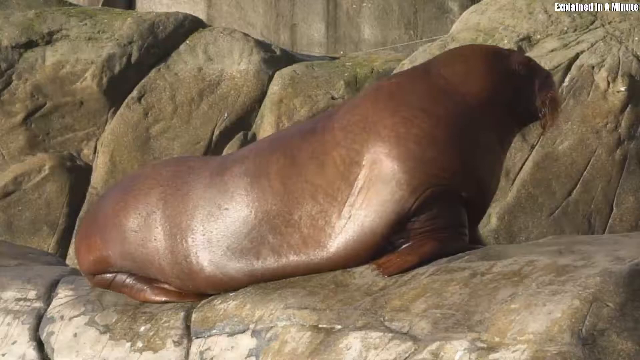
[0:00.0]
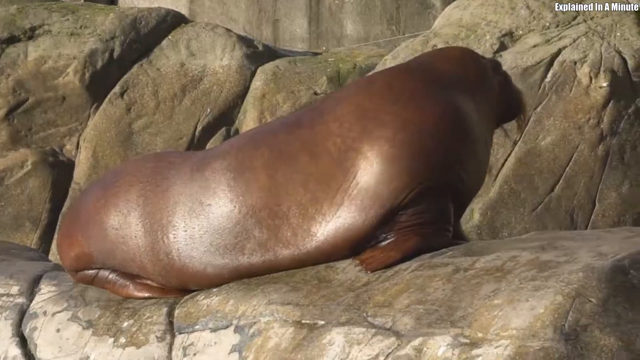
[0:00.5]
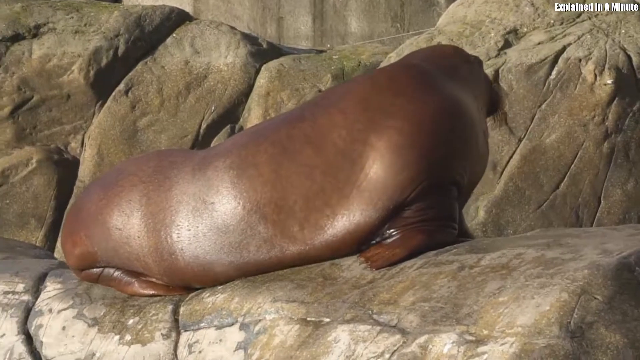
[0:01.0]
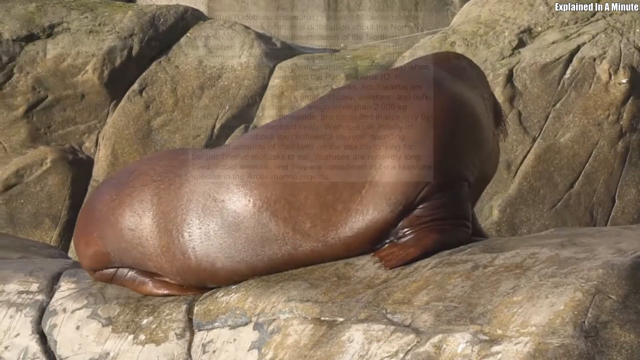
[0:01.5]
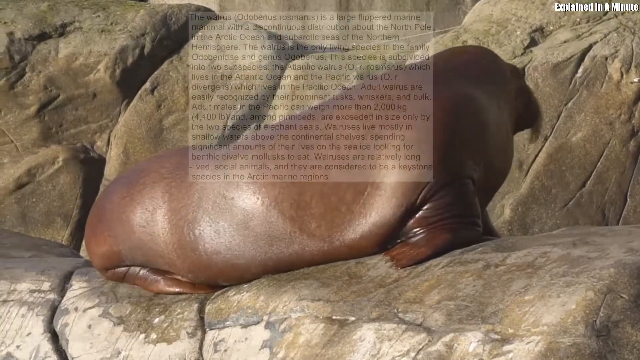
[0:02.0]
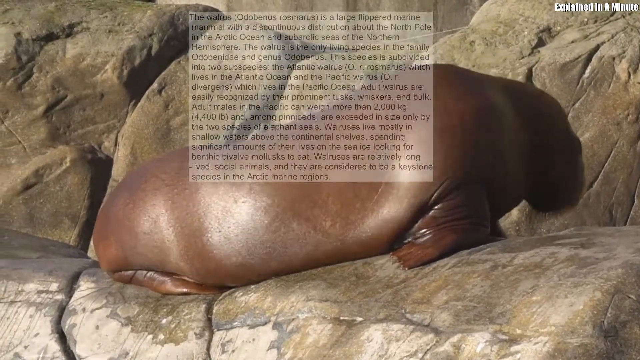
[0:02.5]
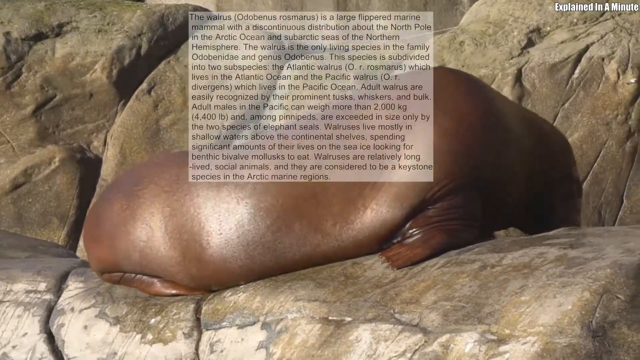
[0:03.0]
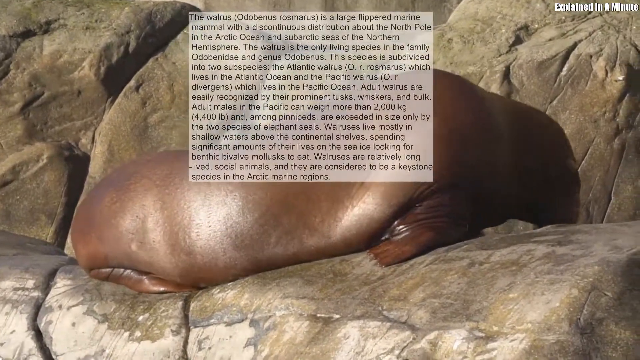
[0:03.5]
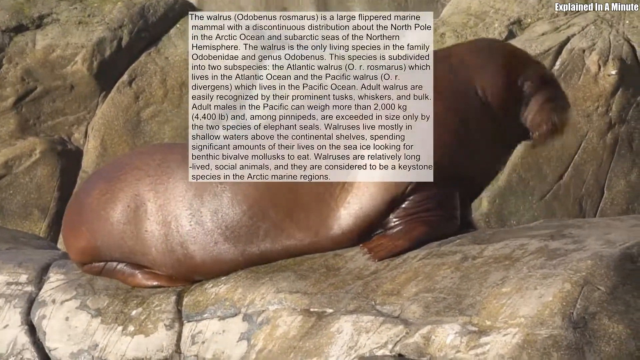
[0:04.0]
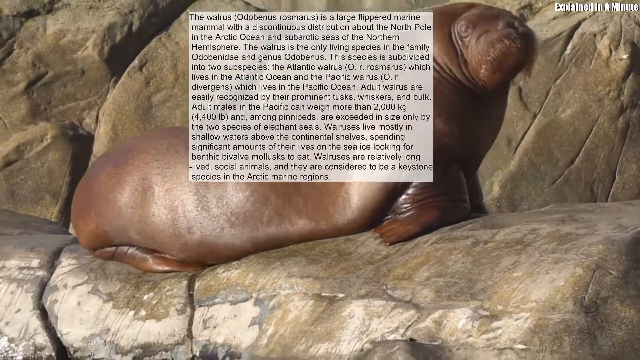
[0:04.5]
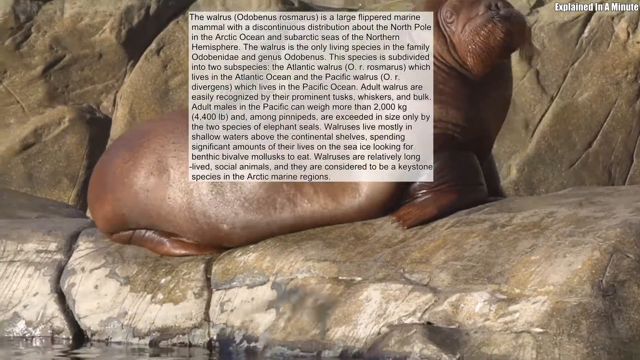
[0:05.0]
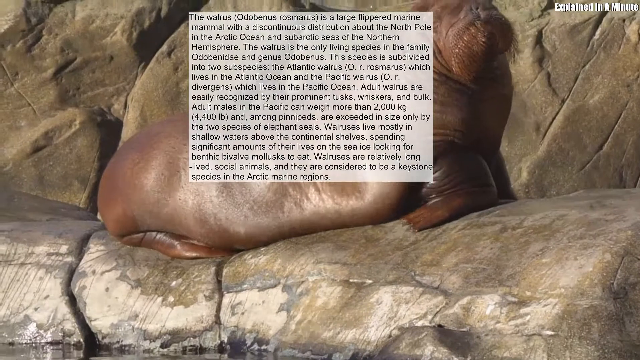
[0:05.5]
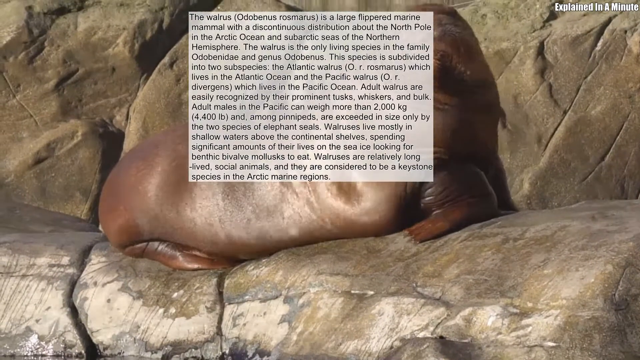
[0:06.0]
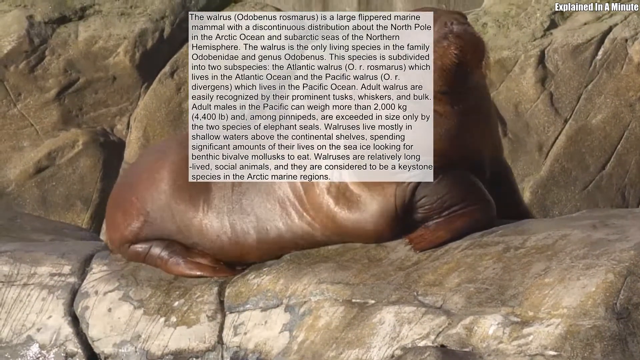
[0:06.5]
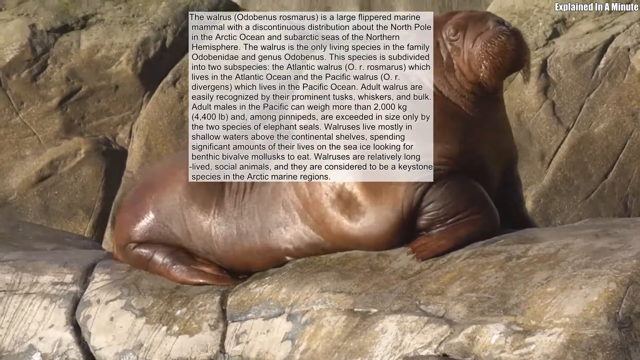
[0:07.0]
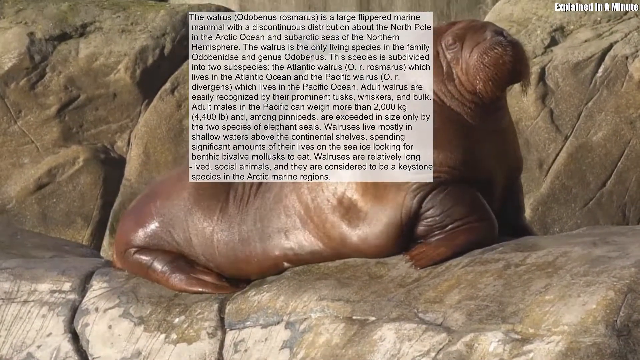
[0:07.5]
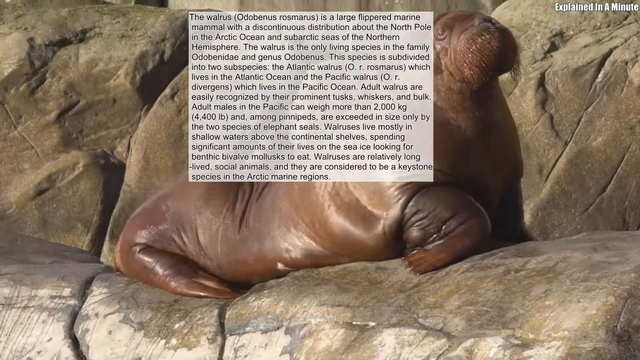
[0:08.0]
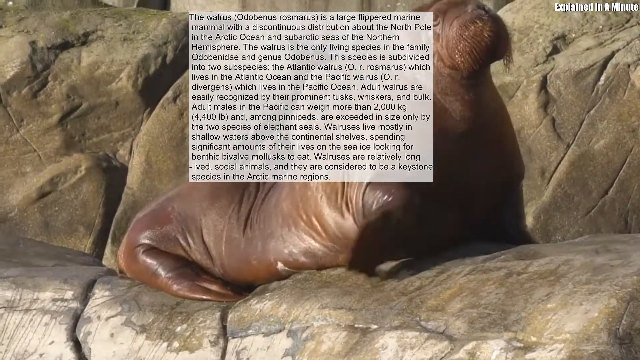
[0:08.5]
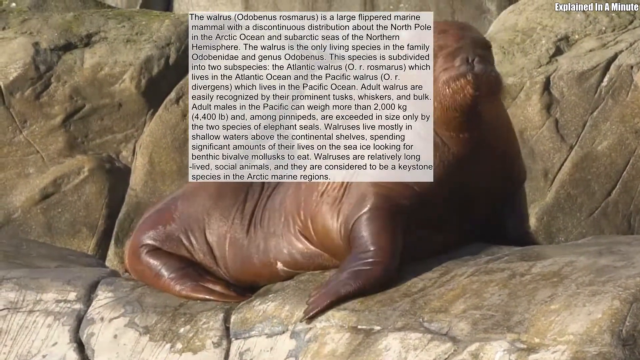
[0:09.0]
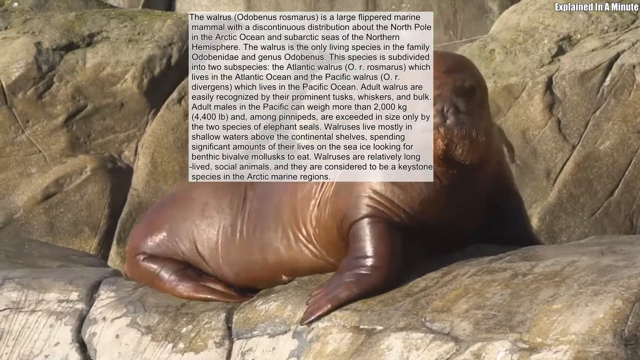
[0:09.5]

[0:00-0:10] A large, tuskless brown walrus is the focus of the video; its skin ripples as it is on top of large grey rocks. A small news article pops up in a white rectangle imposed over the footage of the walrus. It has multiple lines of black text beginning "The walrus, Odobenus rosmarinus, is a large", continuing with "a discontinuous distribution about the North Pole in the Arctic Ocean and sub-Arctic areas of the Northern Hemisphere", and stating that the walrus is the only living species in its family and in the genus Odobenus. It then reads "This species is subdivided into two species, the Atlantic walrus, O.R. rosmarinus, which lives in the Atlantic Ocean and the Pacific walrus, O.R. divergens, which lives in the Pacific Ocean." The text goes on with more facts about the walrus.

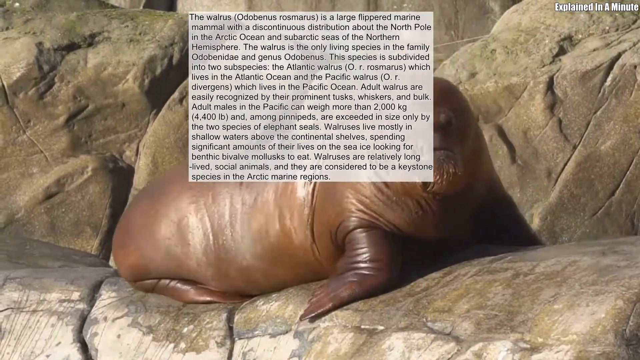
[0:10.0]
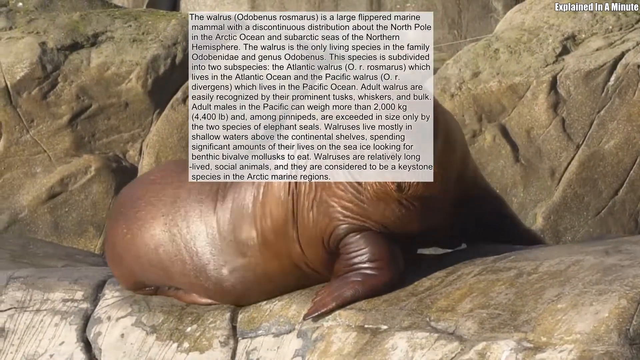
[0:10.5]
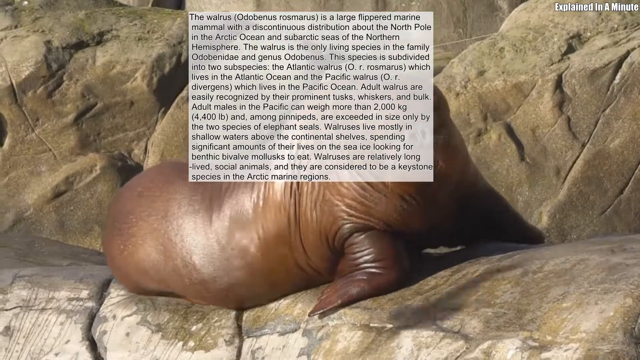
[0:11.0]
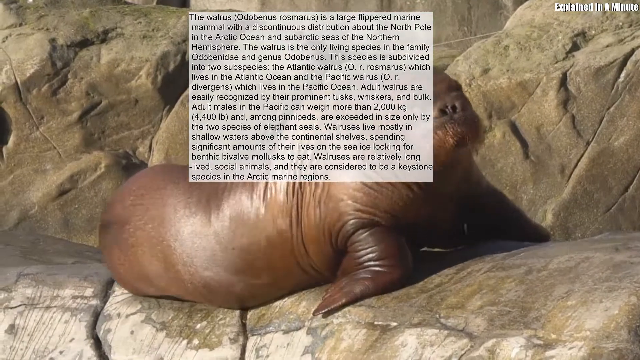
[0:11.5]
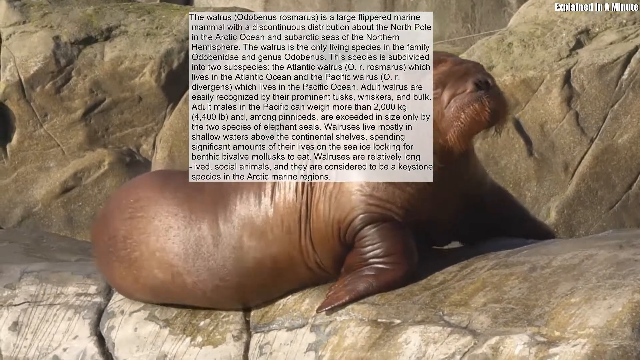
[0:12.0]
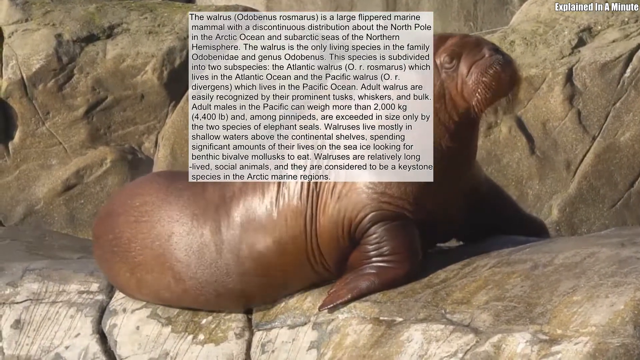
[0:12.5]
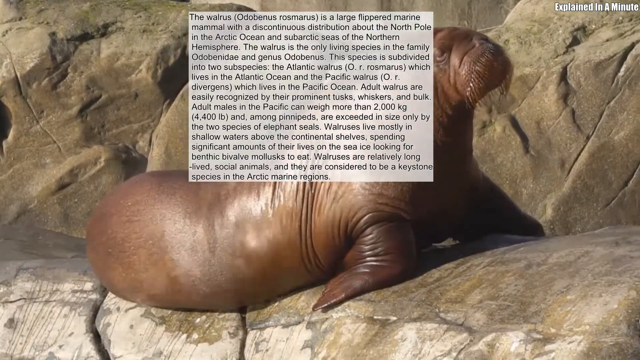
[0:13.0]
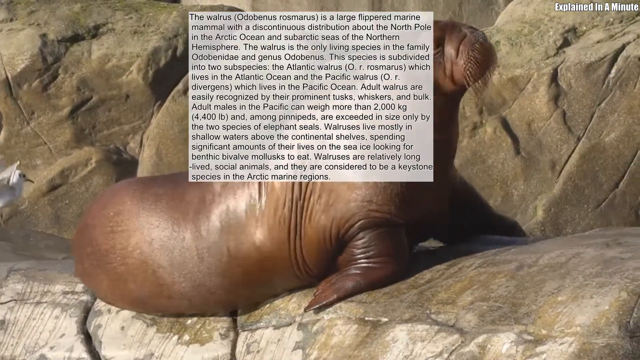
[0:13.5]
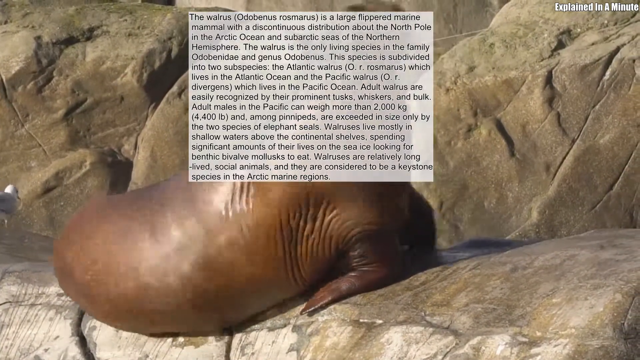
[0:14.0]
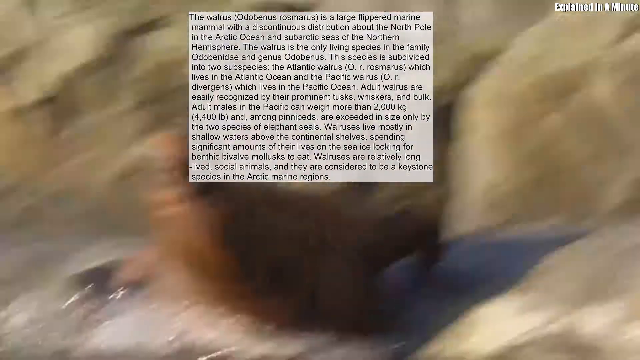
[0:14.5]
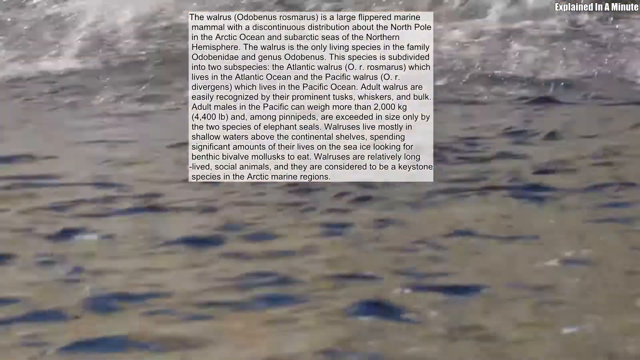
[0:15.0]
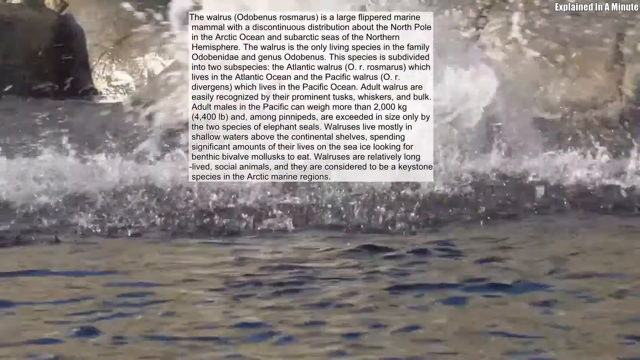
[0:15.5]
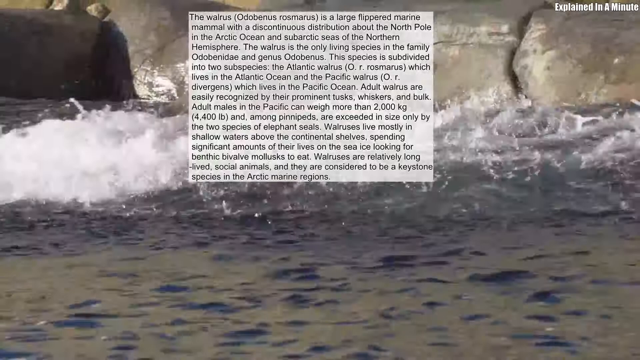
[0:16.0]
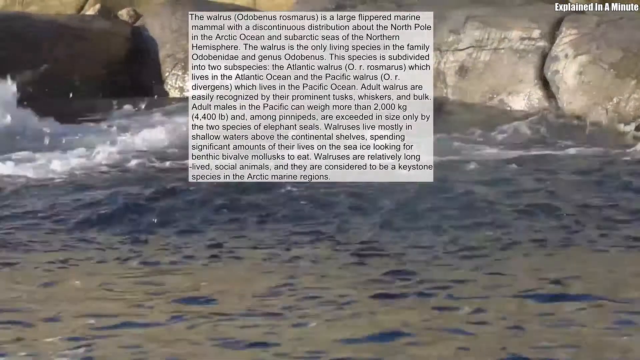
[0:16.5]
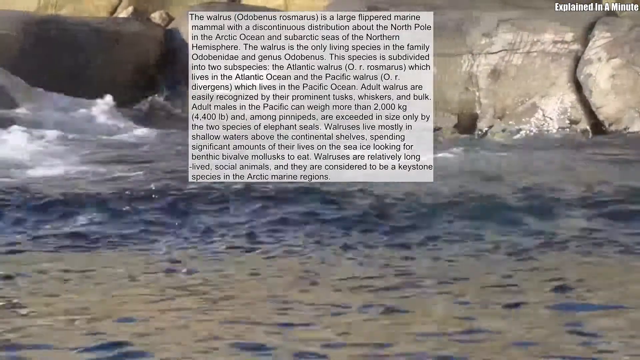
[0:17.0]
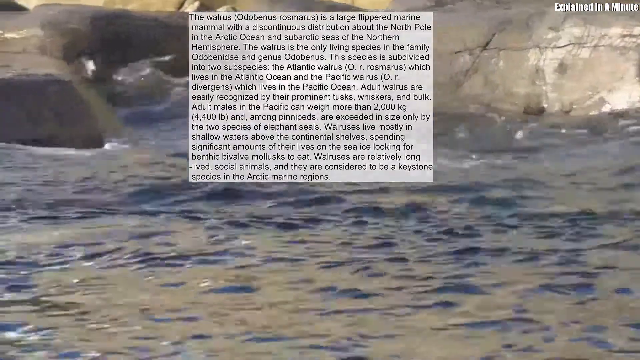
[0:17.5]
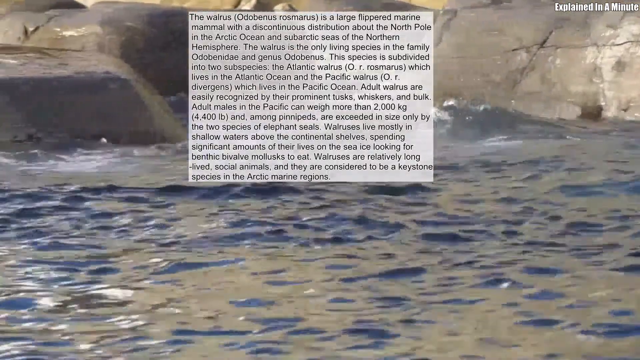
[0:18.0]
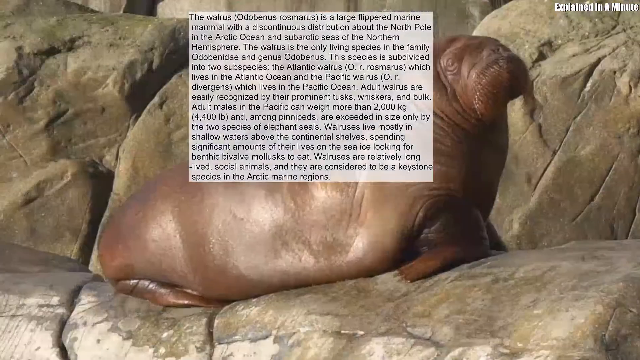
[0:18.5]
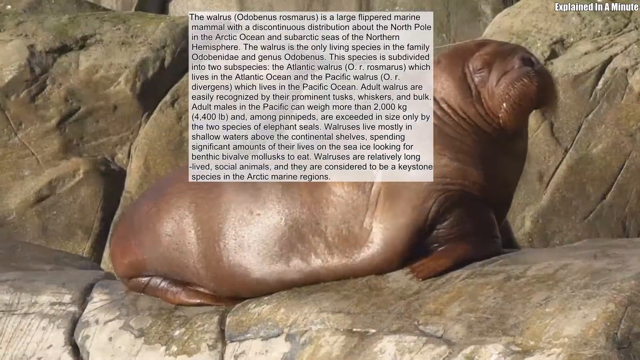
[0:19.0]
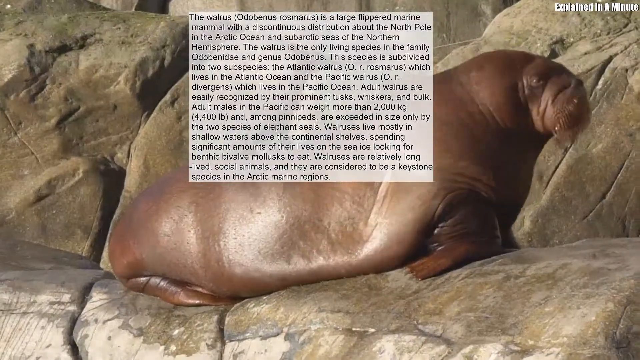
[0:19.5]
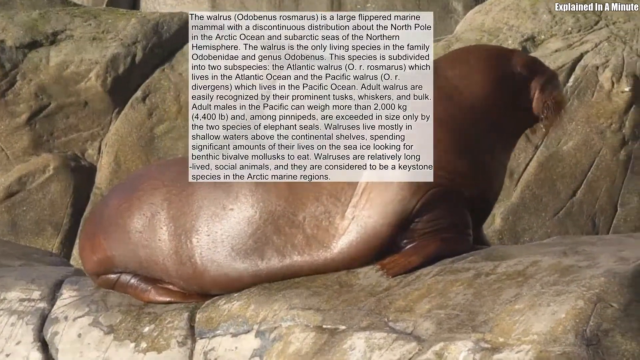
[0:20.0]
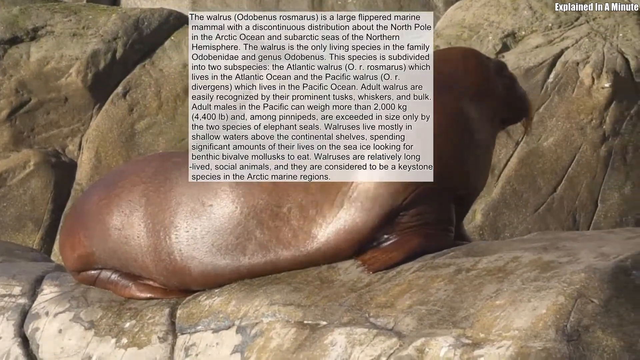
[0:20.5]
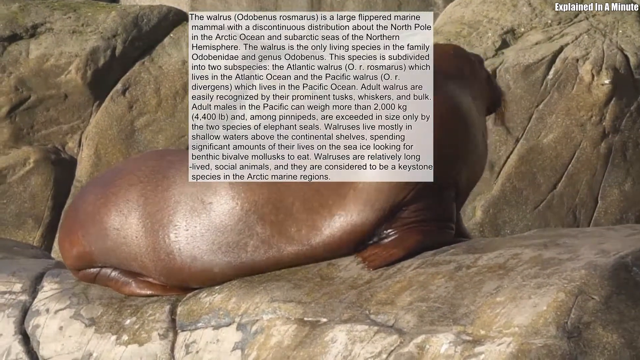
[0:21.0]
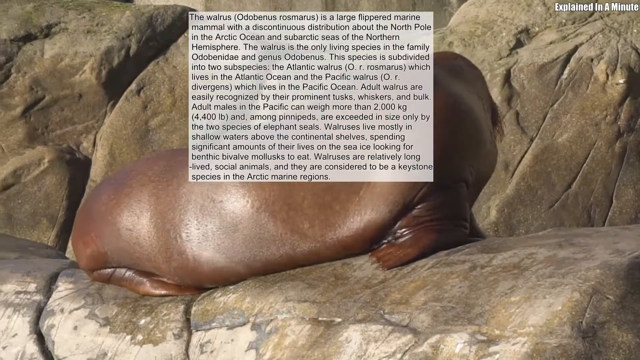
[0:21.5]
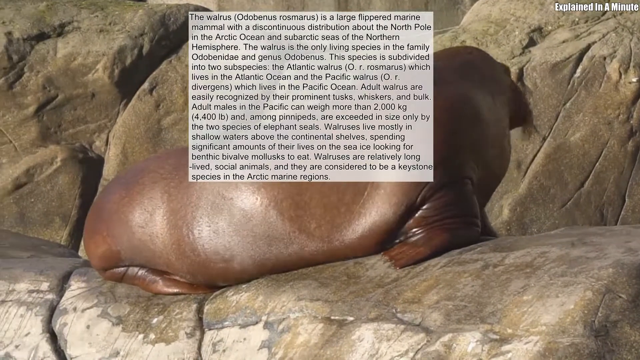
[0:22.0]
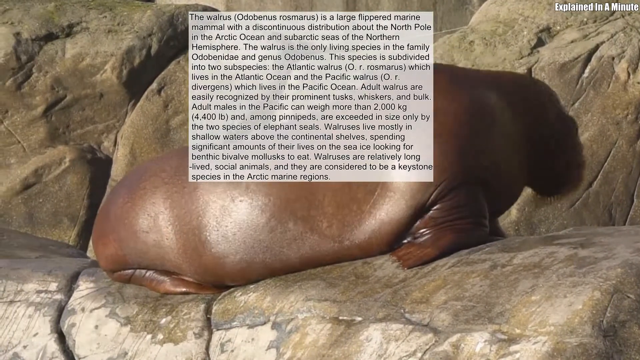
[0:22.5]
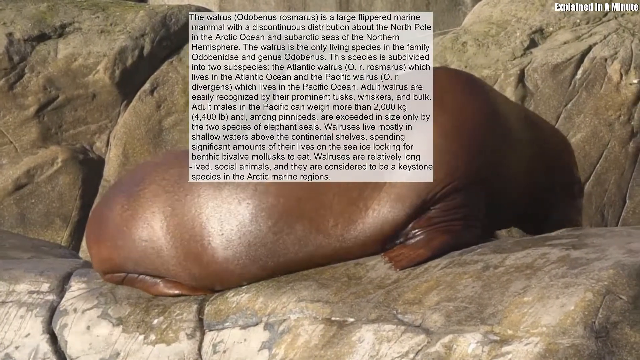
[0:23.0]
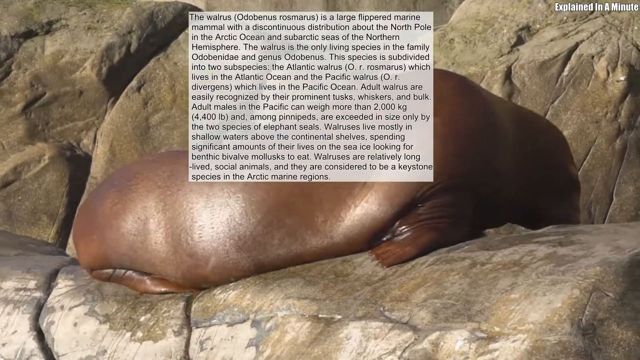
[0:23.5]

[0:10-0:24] A brown, tuskless walrus is on top of large gray rocks. It looks away and then flips from the rocks into the water beneath it, letting off a huge splash. Imposed over the footage is a white semi-transparent rectangle with multiple facts about the walrus, giving information on walrus habitats, the different kinds of walruses and where they live, and why they are important. In the top right, a watermark reads "explained in a minute", suggesting a quick factoid video about walruses.